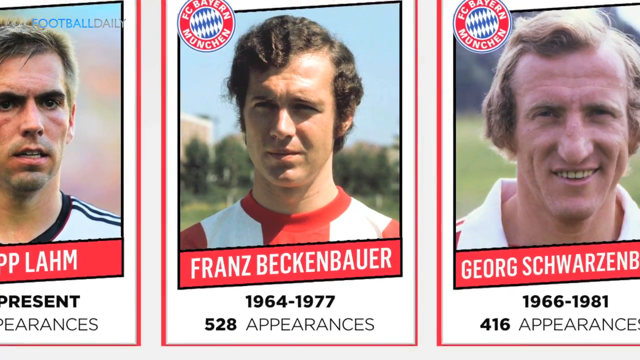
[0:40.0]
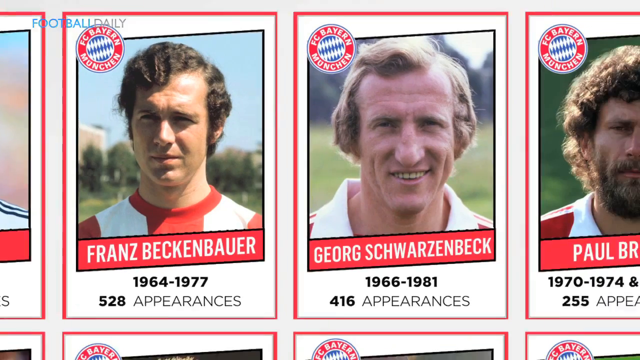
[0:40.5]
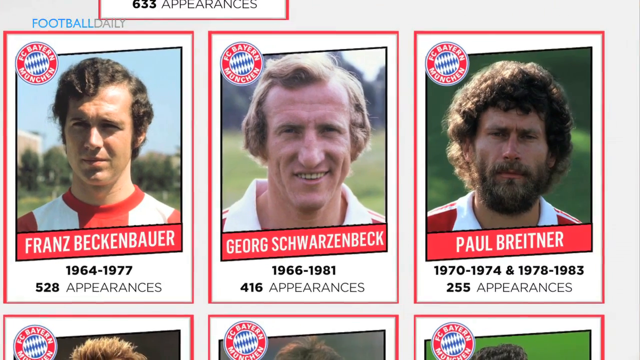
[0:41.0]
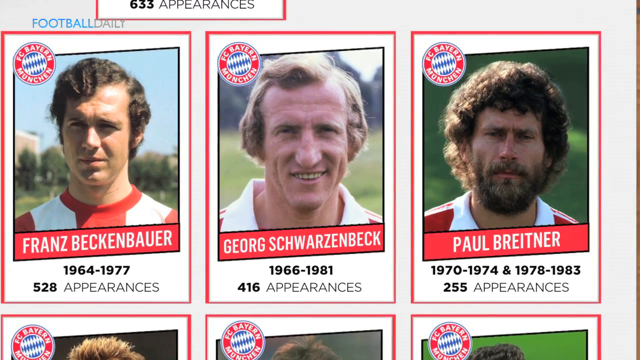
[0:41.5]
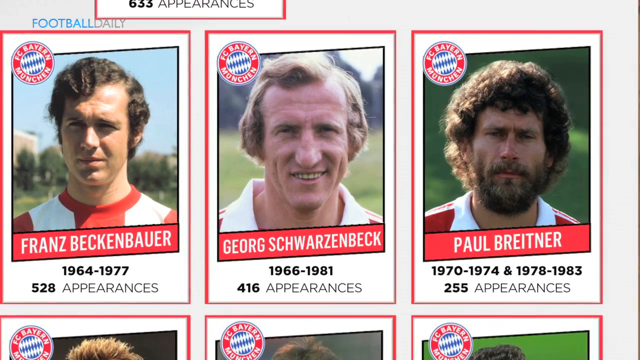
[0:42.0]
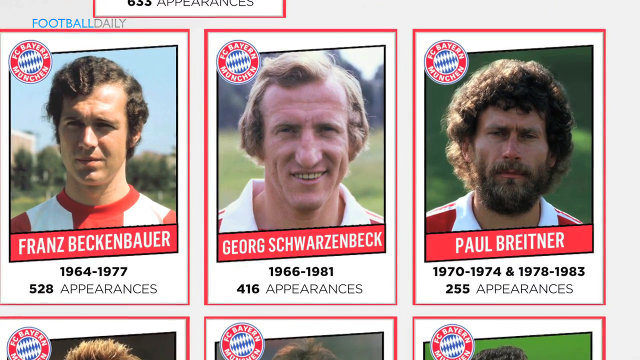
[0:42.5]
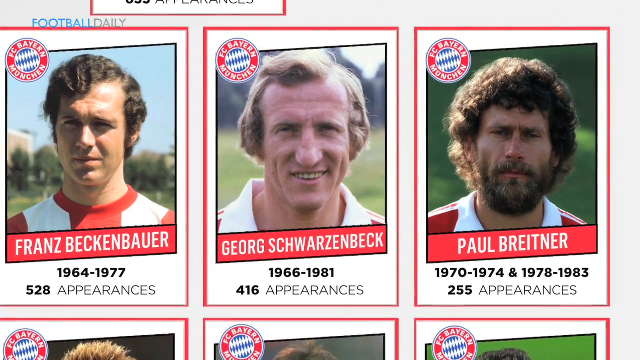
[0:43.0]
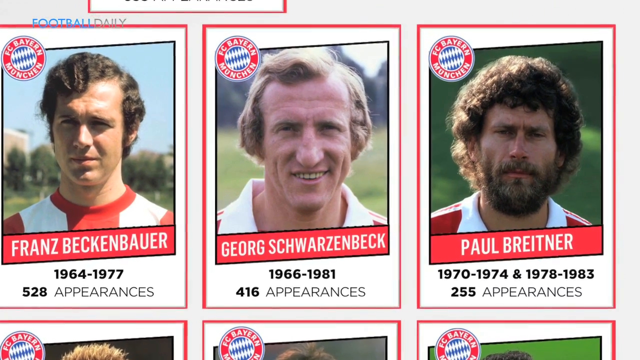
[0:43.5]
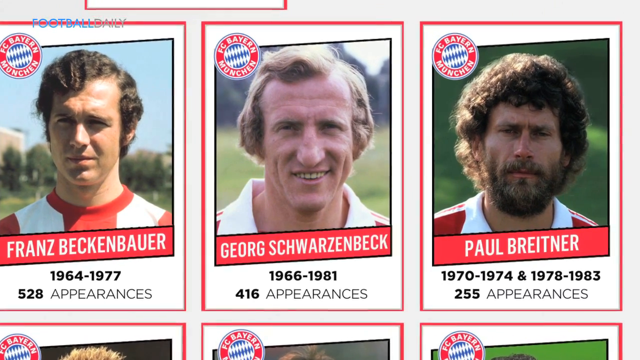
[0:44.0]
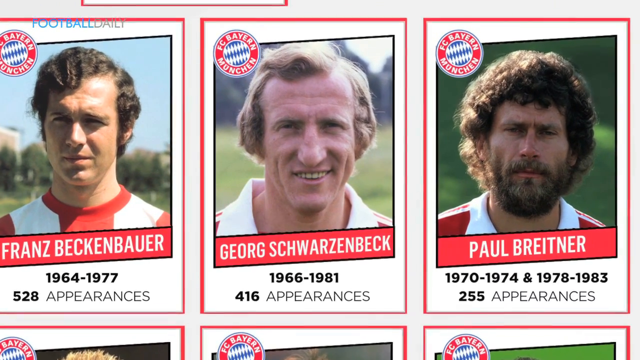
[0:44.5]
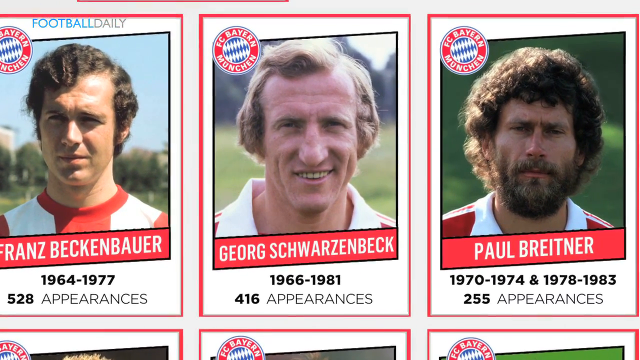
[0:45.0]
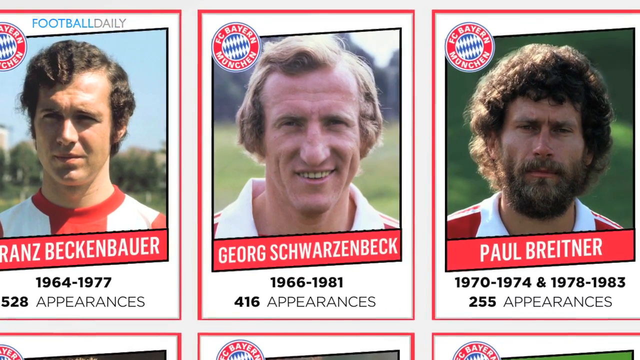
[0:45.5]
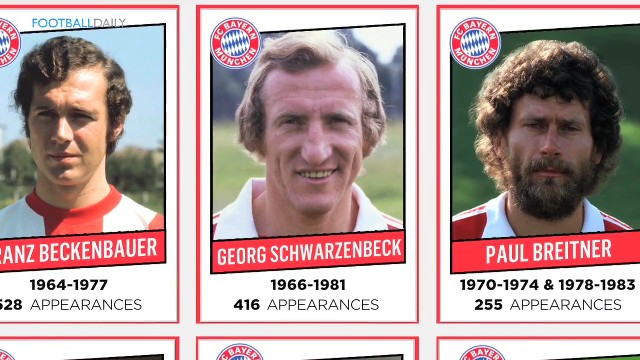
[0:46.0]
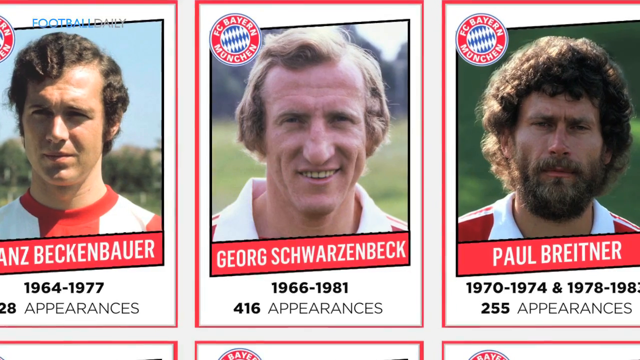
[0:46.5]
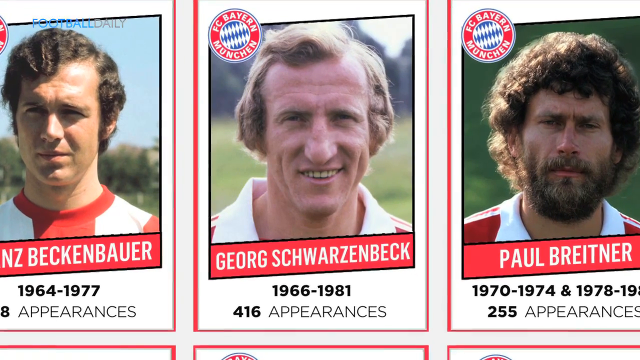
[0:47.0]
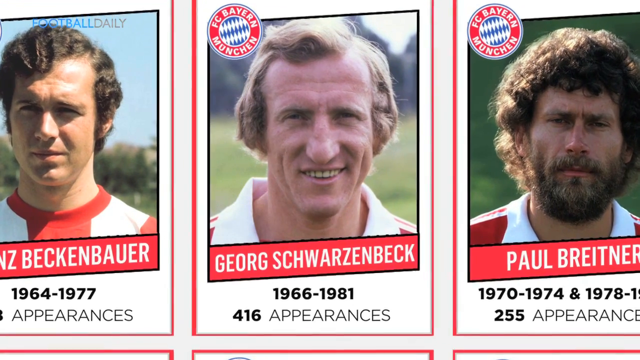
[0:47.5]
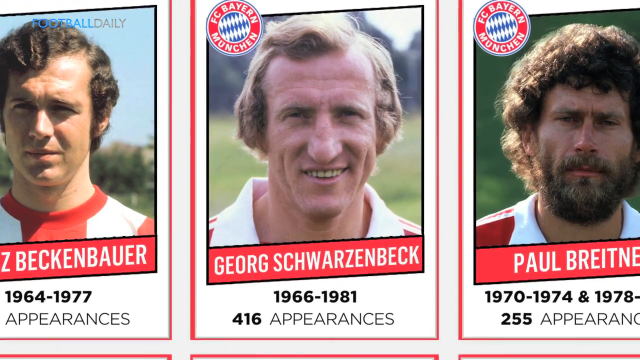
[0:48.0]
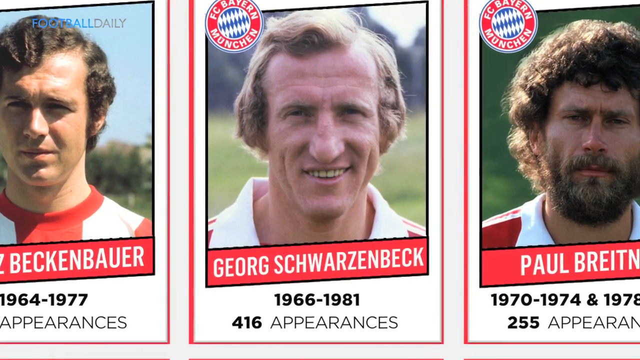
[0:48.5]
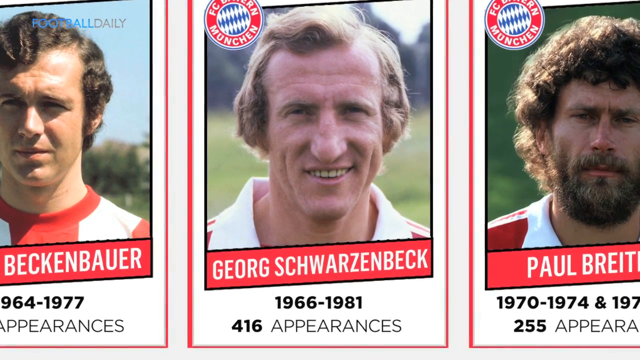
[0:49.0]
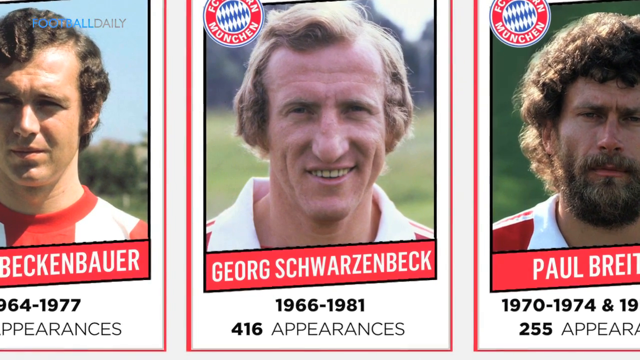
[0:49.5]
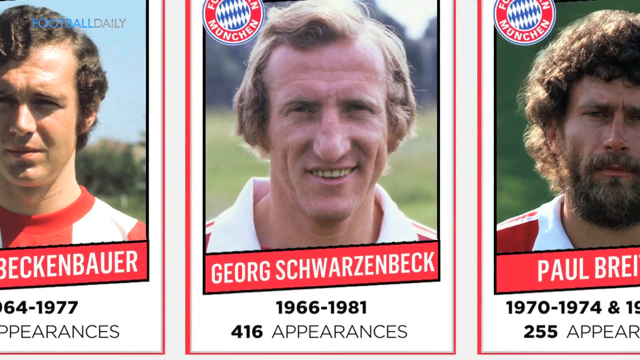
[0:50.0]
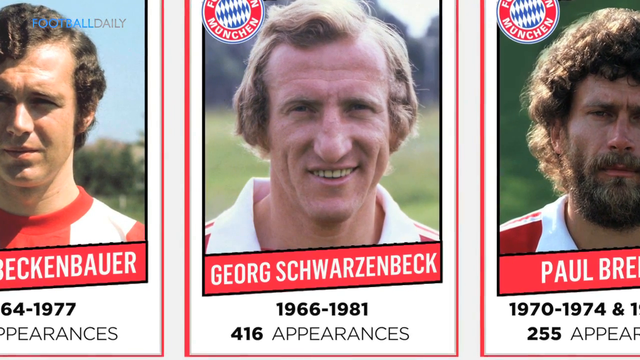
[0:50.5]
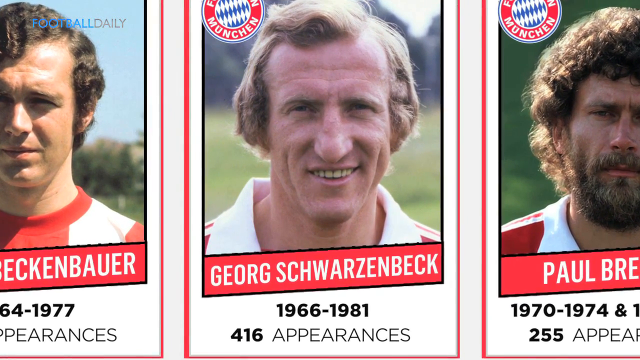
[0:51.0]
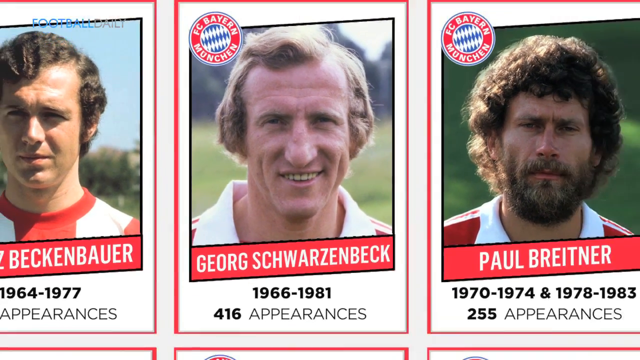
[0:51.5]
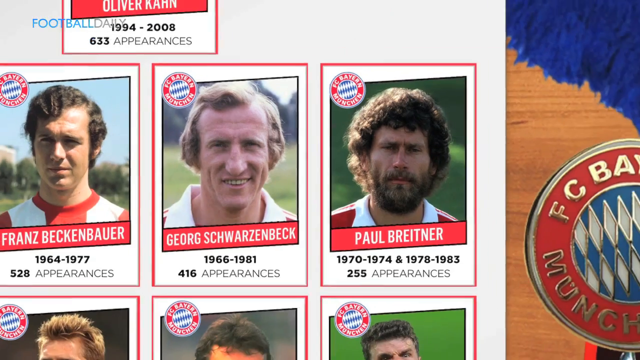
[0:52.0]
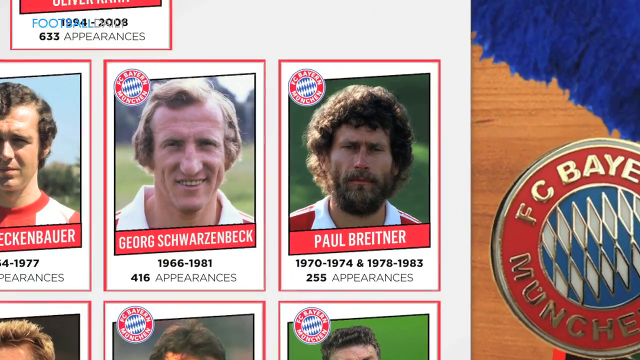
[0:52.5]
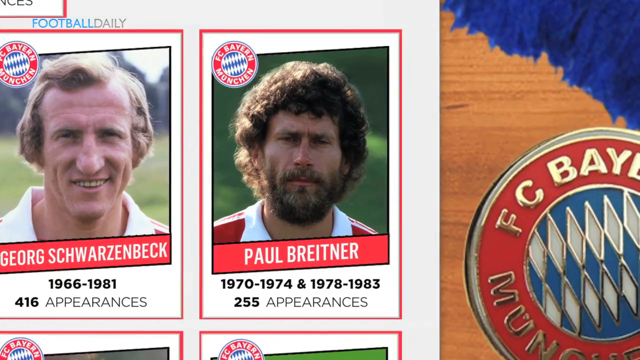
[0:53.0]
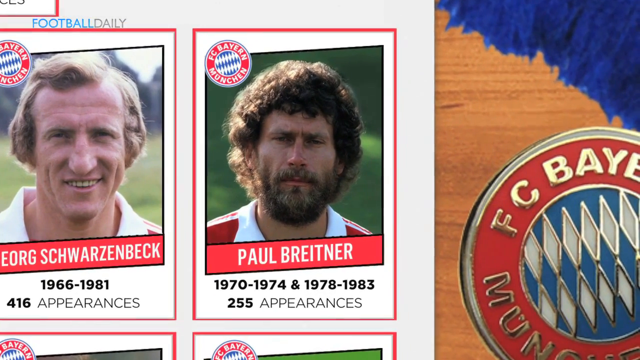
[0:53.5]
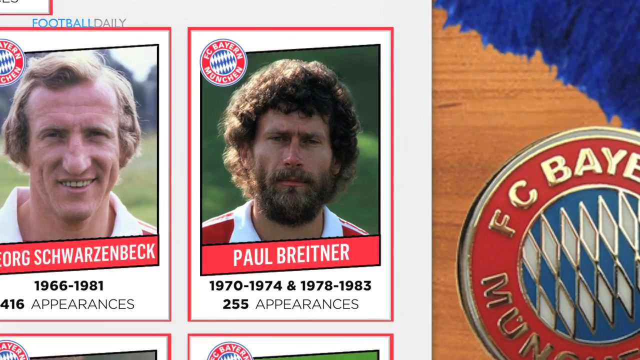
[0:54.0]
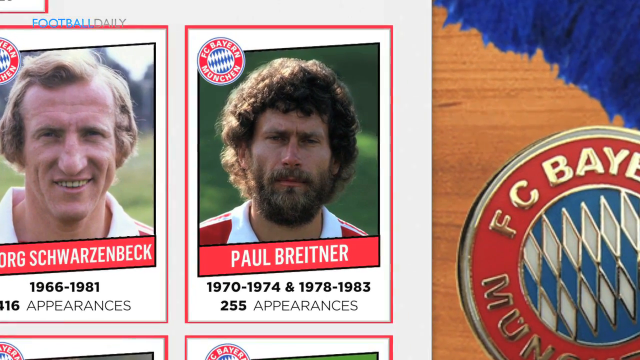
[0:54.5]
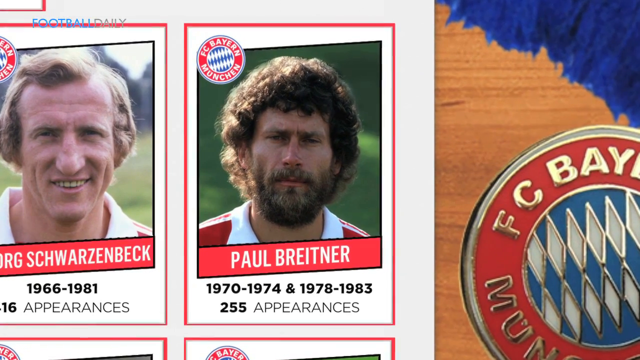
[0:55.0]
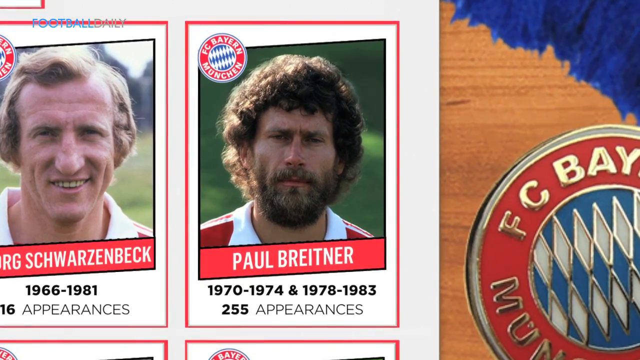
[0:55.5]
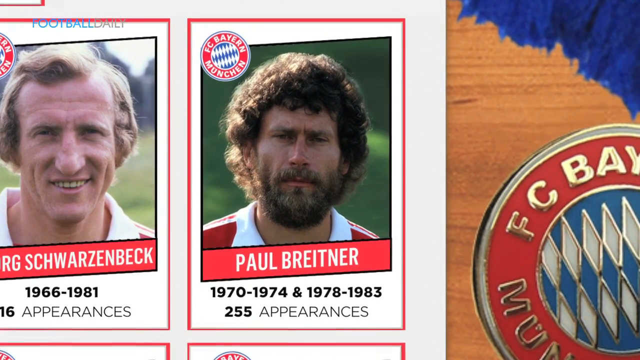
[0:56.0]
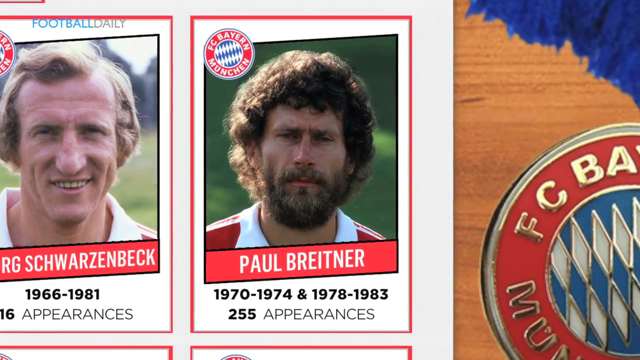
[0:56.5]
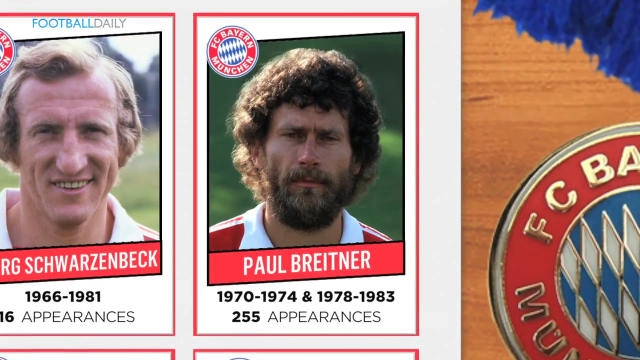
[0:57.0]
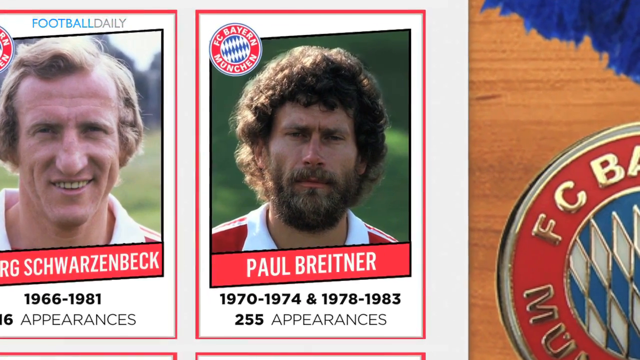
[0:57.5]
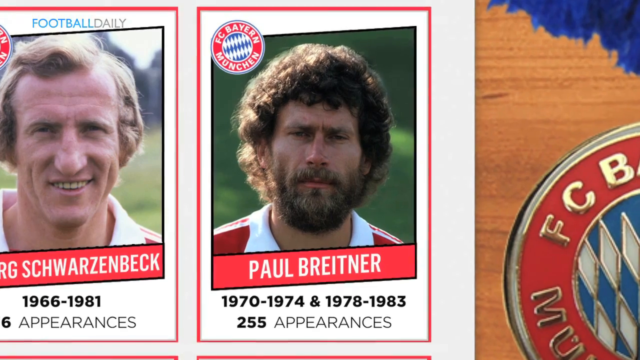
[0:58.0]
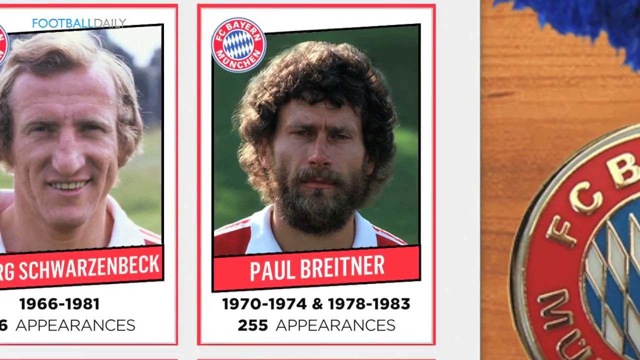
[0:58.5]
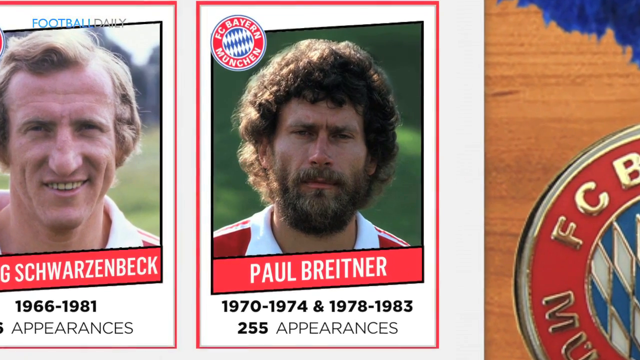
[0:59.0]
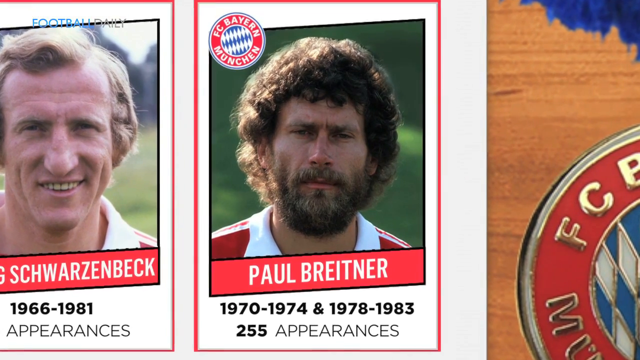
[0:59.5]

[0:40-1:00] The words "FOOTBALL DAILY" are in the upper left corner, and the video shows different athletes who appear to have played on this team over the years. The view zooms down to the last player in the row, "PAUL BREITNER", who played "1970-1974" and, after an "&" symbol, "1978-1983", with "255 appearances". The video zooms in on each player individually, at first also taking in the neighboring player until their faces are slightly cut off. After zooming in on Paul, it quickly zooms out and then slides down.